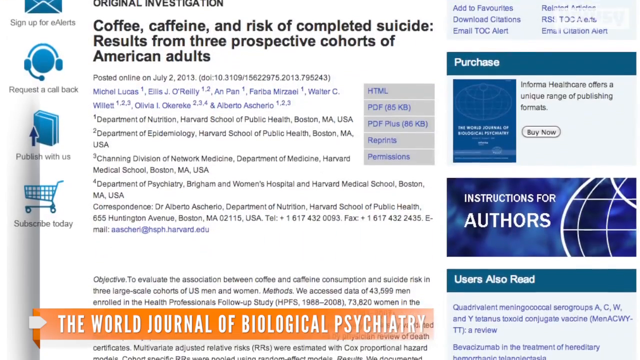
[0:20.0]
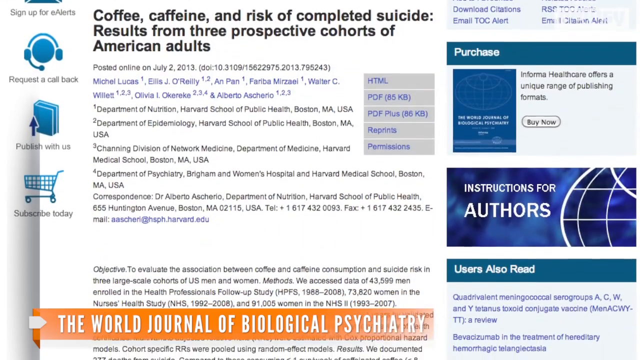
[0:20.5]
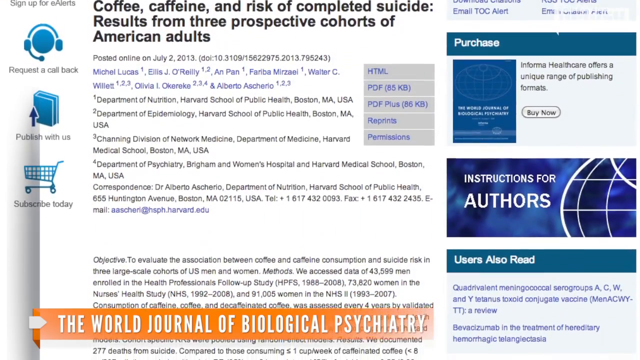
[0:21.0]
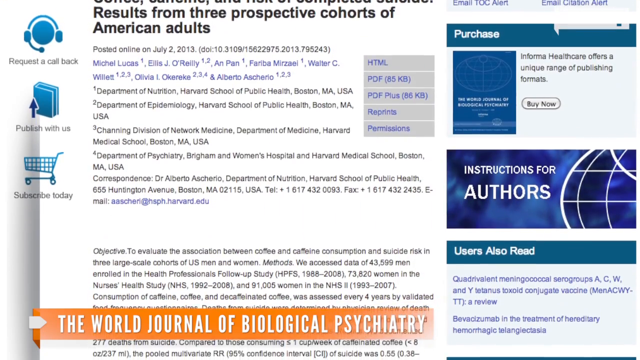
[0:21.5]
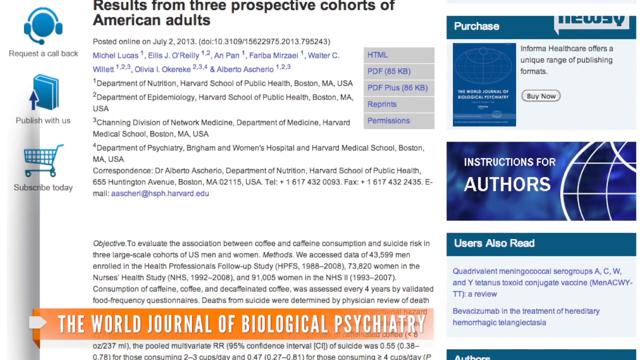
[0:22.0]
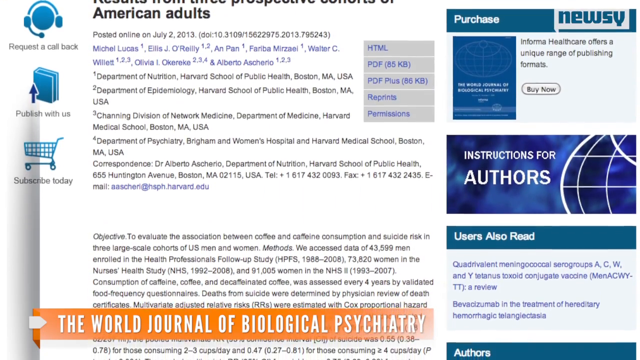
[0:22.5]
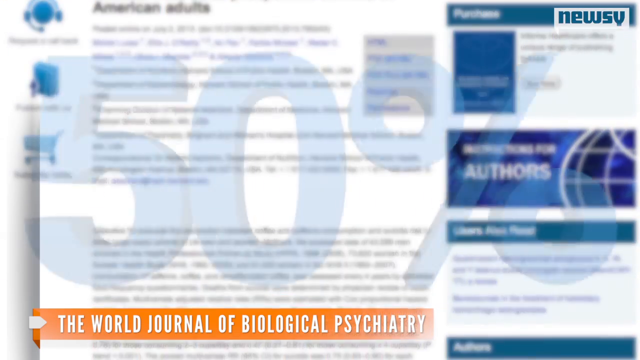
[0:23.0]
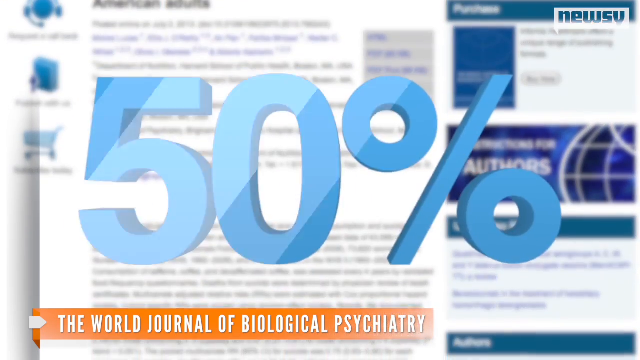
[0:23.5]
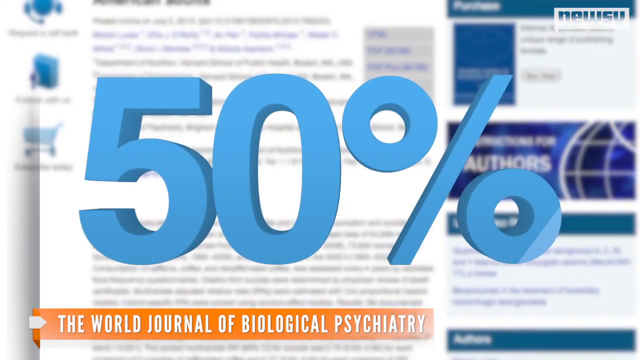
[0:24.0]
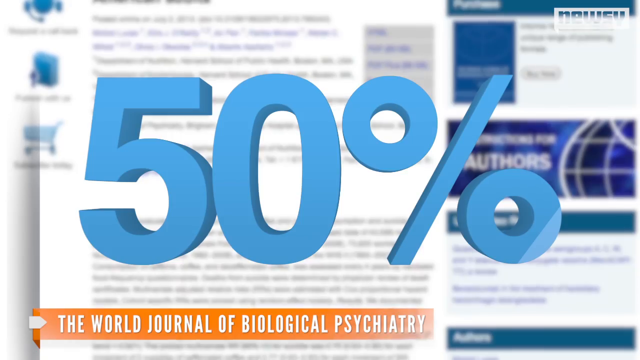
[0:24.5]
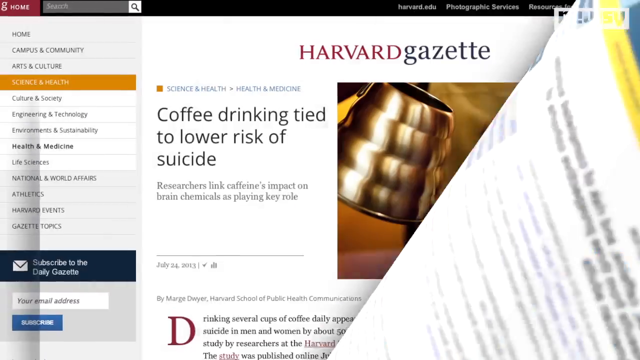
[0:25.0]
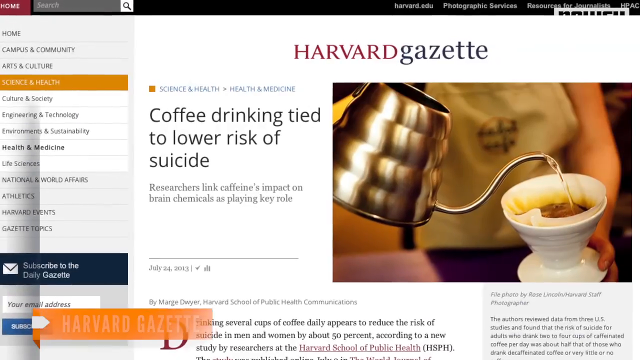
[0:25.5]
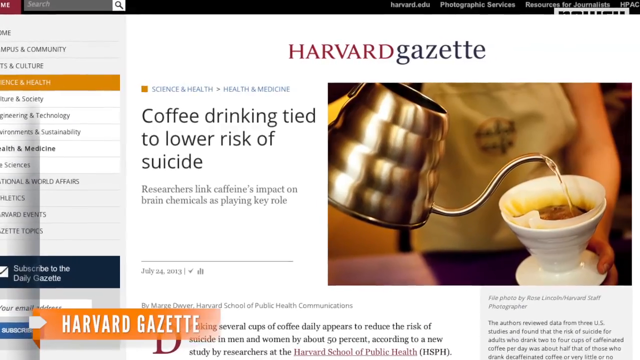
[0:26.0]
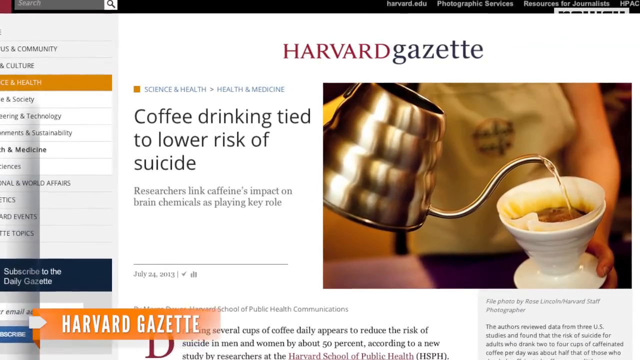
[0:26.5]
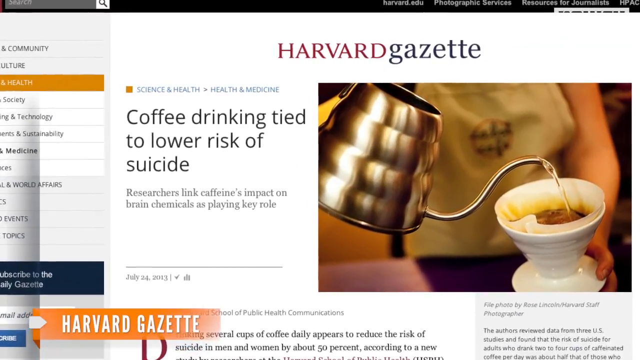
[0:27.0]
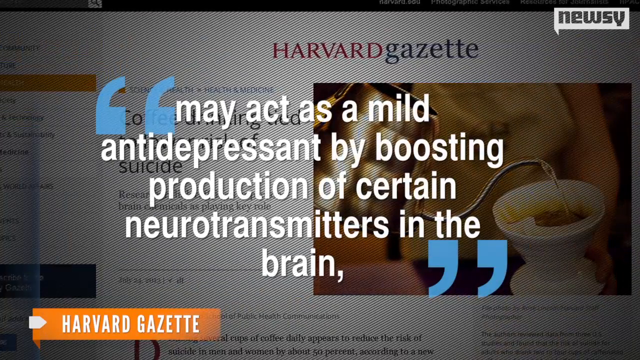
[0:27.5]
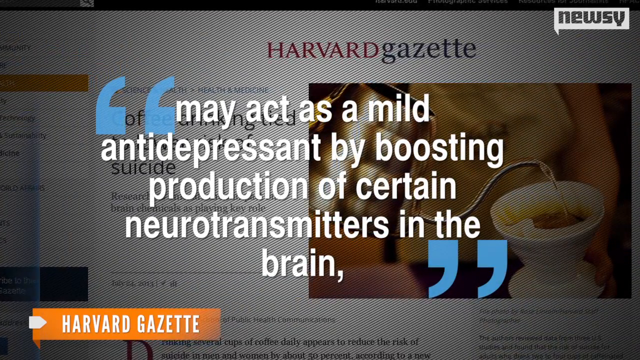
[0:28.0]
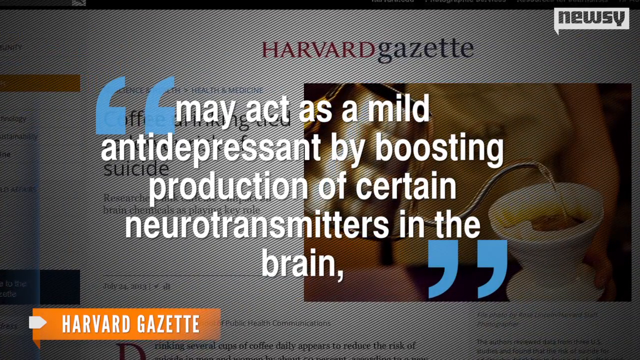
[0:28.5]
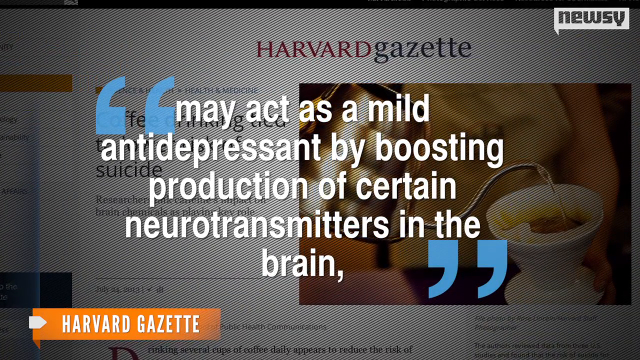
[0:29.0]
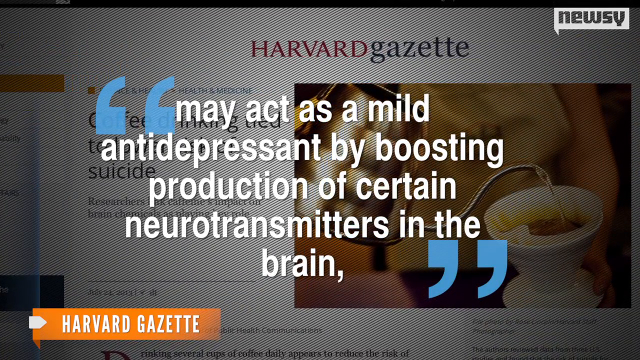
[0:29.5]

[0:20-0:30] An article is on the screen in a news report, reading "coffee, caffeine, and risk of completed suicide results from three prospective cohorts of American adults." The camera pans, and then an article from the Harvard Gazette appears, reading "coffee drinking tied to lower risk of suicide." Next, text reads "may act as a mild antidepressant by boosting production of certain neurotransmitters in the brain." Quote marks in blue appear at the end of each quote.